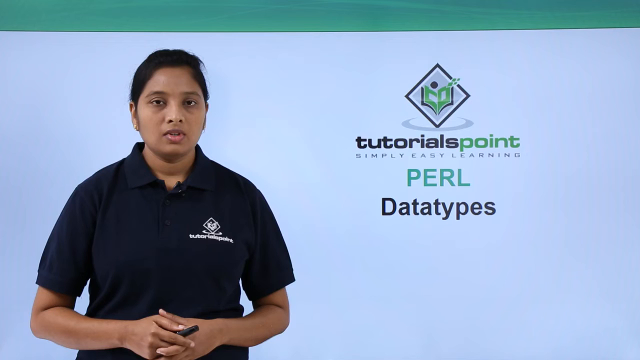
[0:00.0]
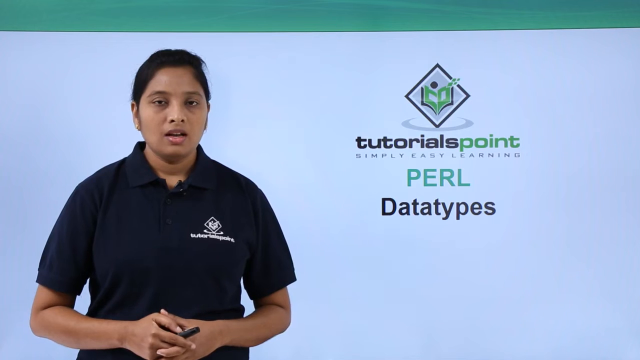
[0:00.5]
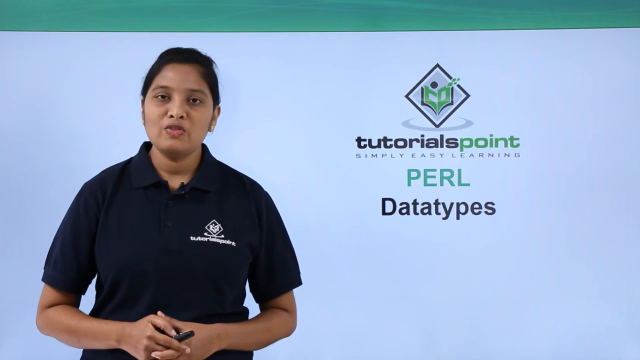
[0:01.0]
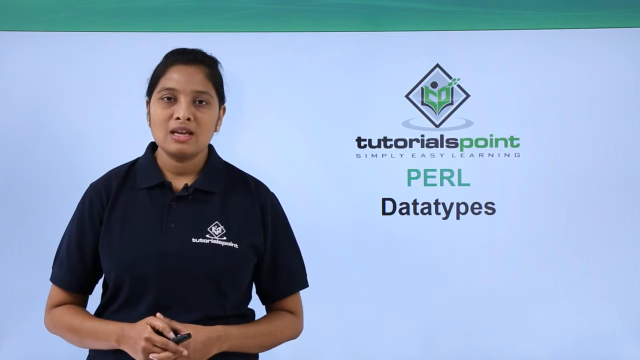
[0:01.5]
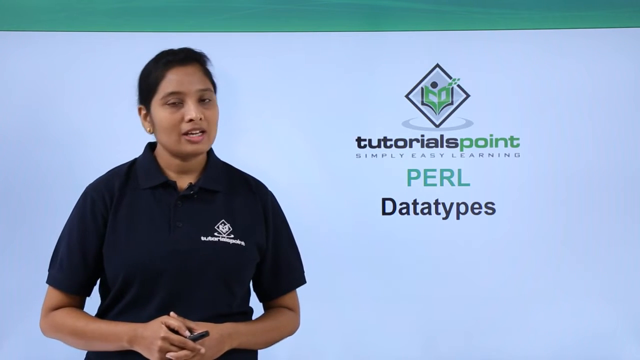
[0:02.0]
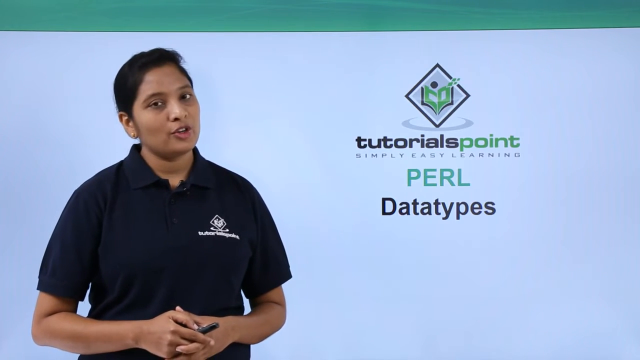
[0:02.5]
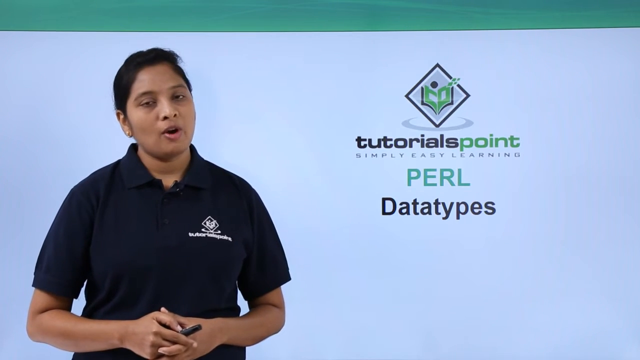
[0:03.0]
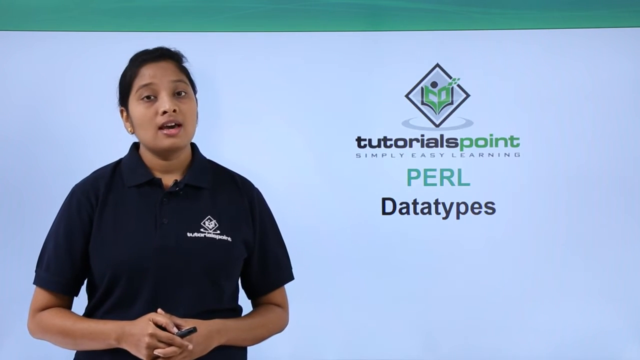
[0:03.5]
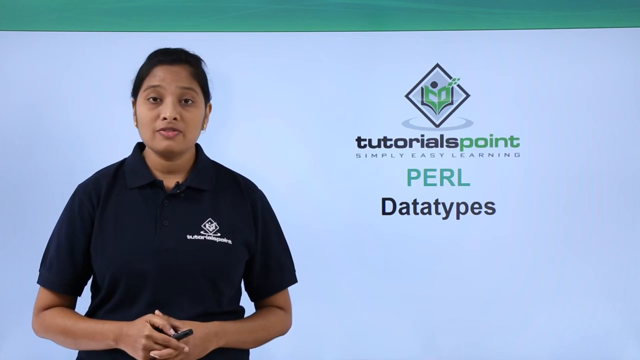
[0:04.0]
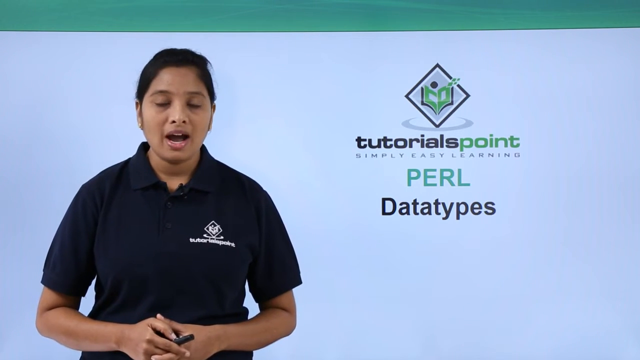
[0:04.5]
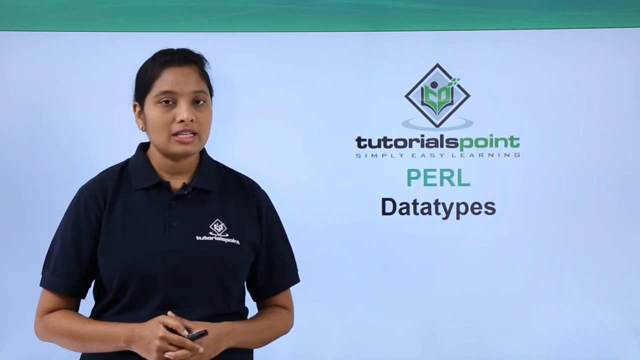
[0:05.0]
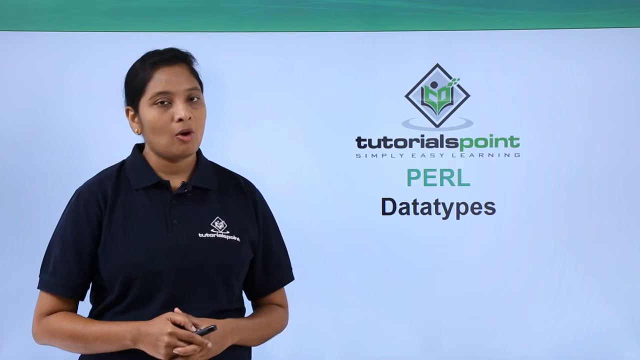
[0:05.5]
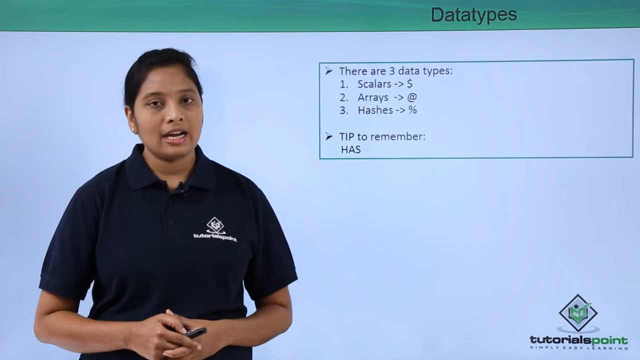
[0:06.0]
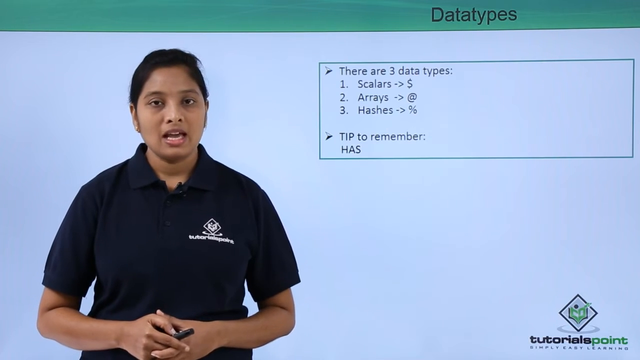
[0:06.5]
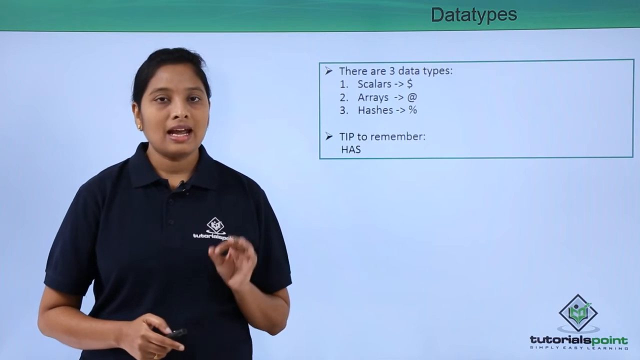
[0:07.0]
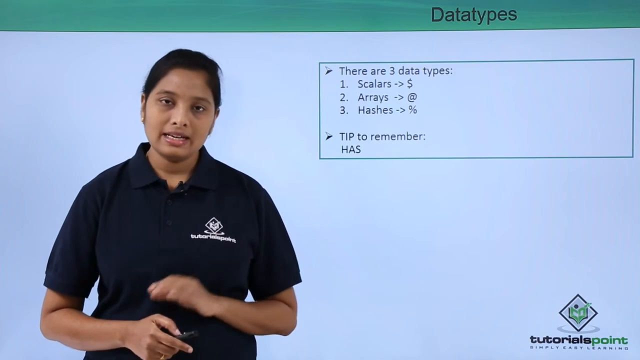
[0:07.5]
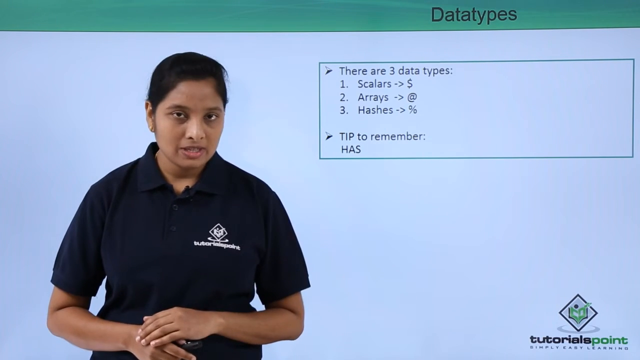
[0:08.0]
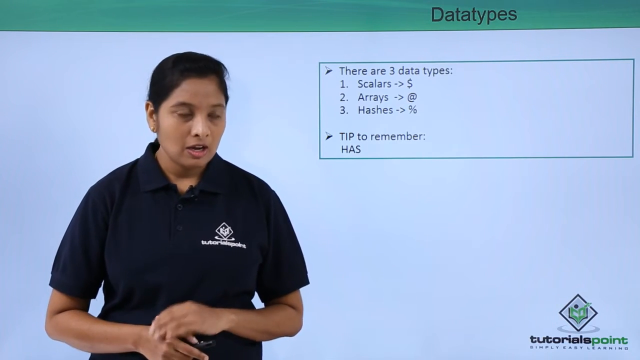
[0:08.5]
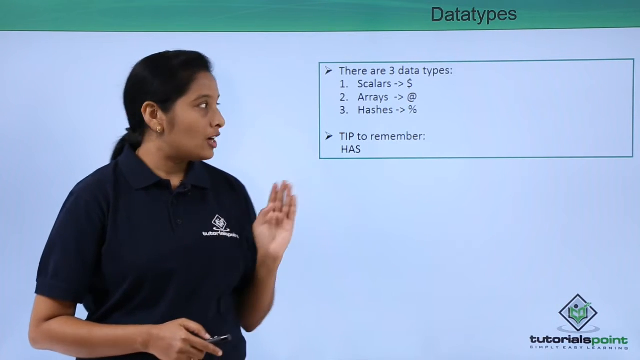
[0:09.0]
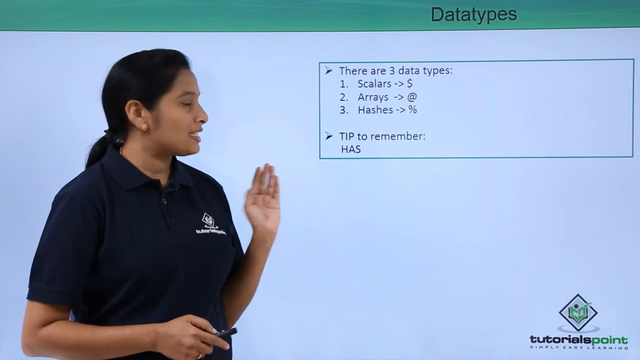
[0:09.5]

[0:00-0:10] The video concerns a data type. The company name is Tutorials Point, and its slogan is "simple easy learning." A woman in black, who looks like an Indian lady, wears earrings and has black eyes. The logo and slogan are in black and green. The next slide says there are three data types: the first is scalars, marked by the dollar sign, the second is arrays, and the third is hashes, marked by the percentage sign. A tip says to remember them as "has." The logo is at the side, and the screen looks bluish.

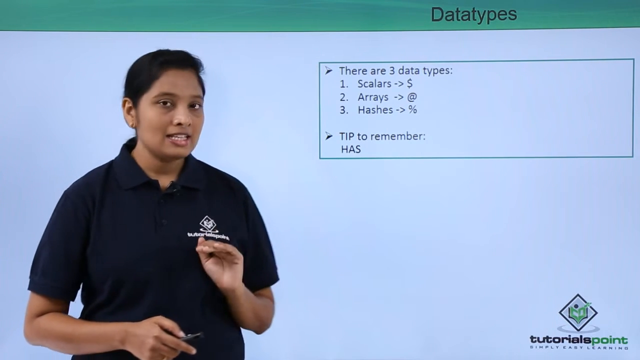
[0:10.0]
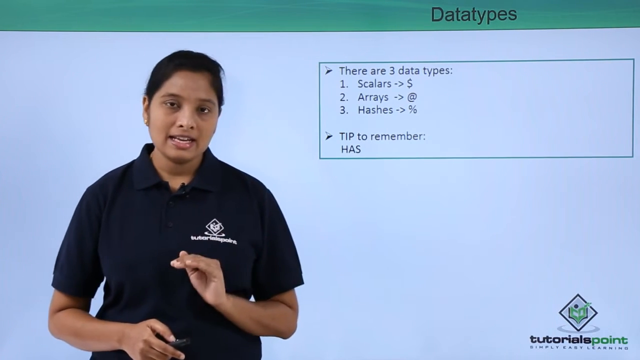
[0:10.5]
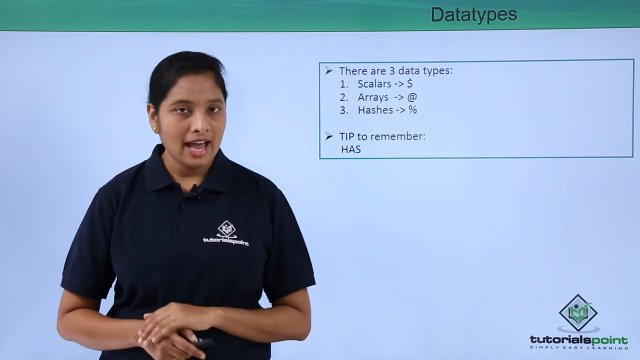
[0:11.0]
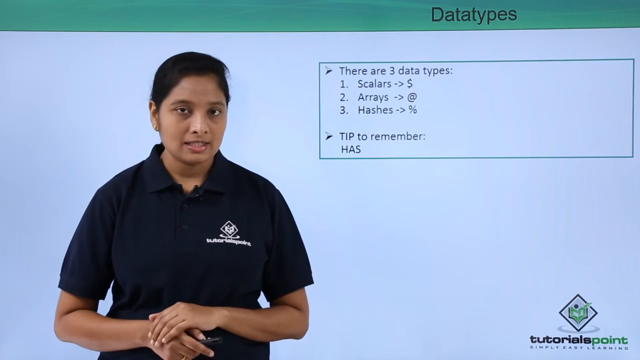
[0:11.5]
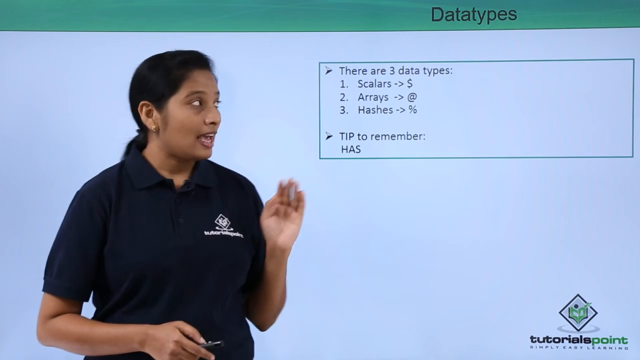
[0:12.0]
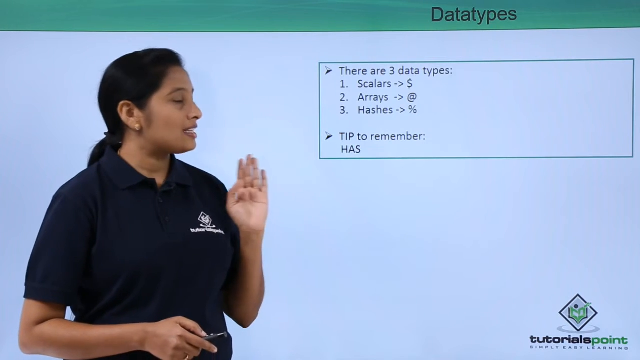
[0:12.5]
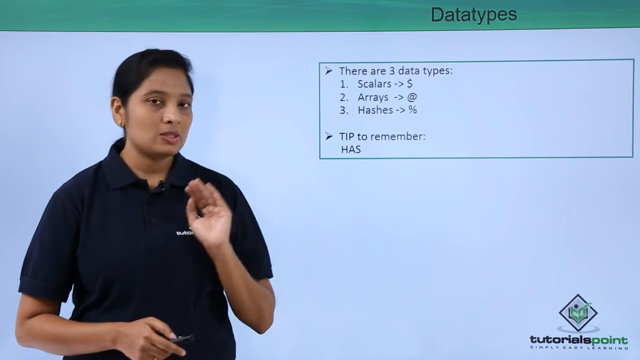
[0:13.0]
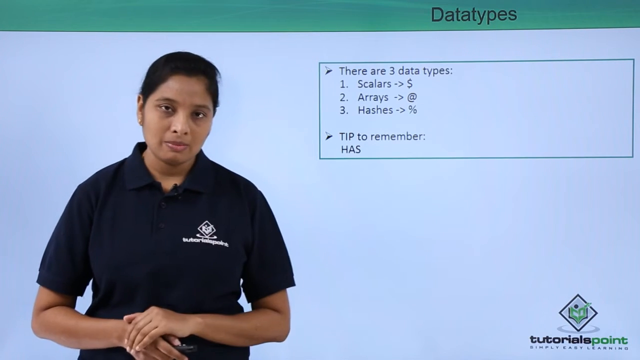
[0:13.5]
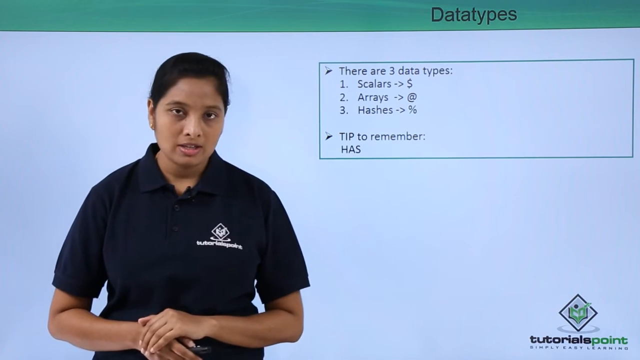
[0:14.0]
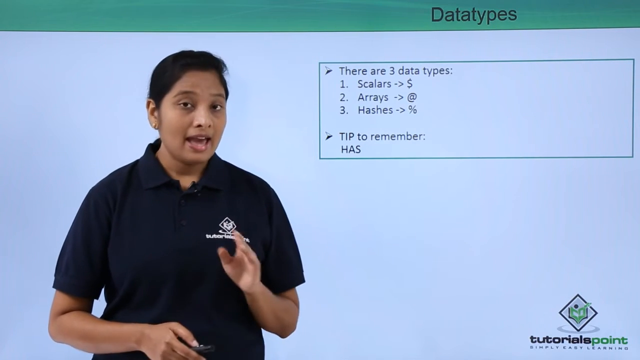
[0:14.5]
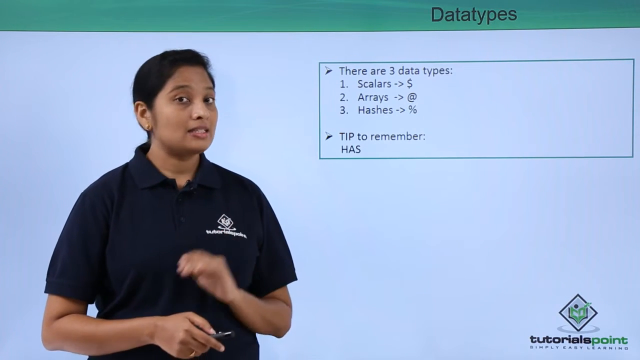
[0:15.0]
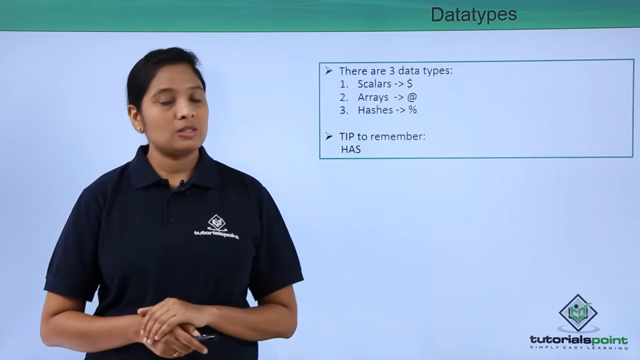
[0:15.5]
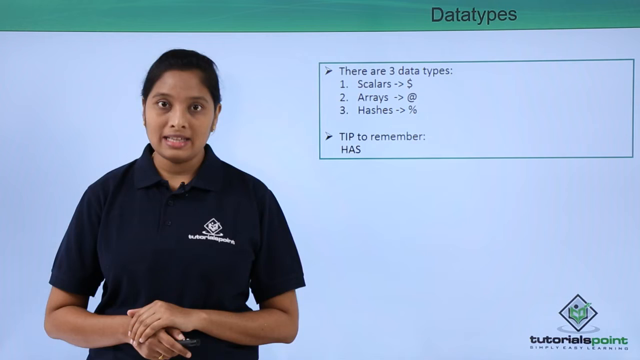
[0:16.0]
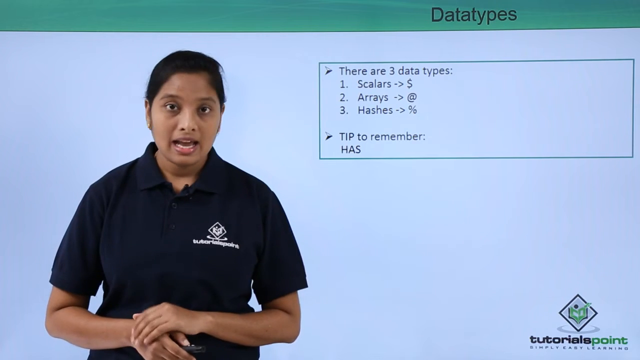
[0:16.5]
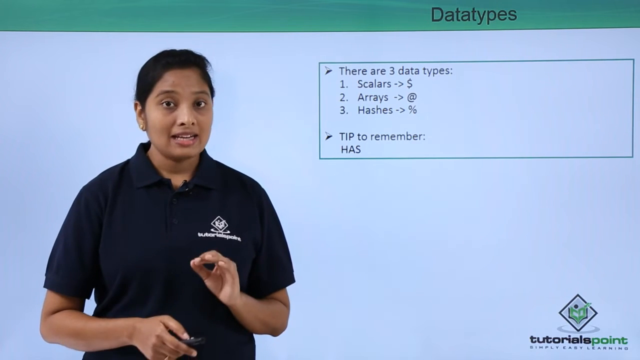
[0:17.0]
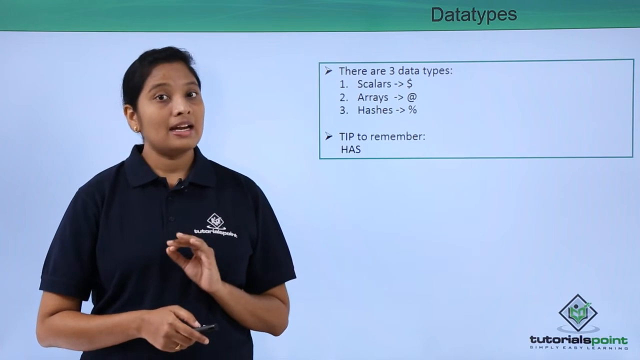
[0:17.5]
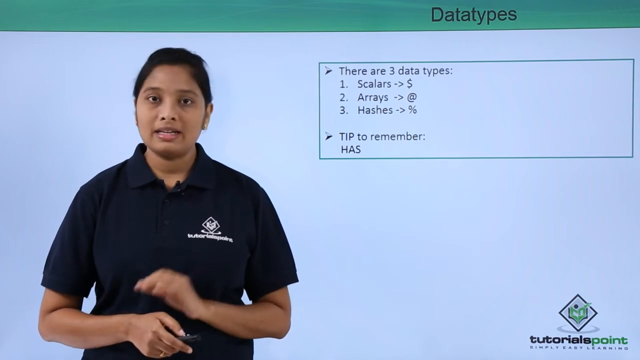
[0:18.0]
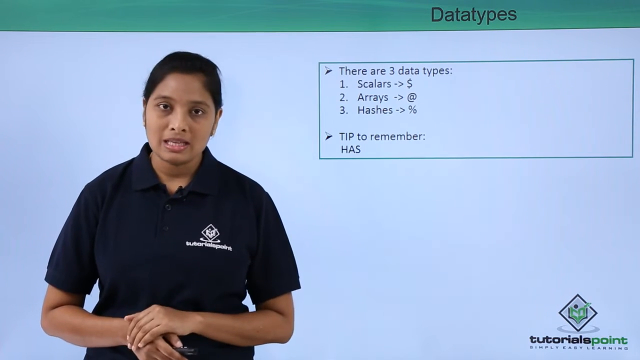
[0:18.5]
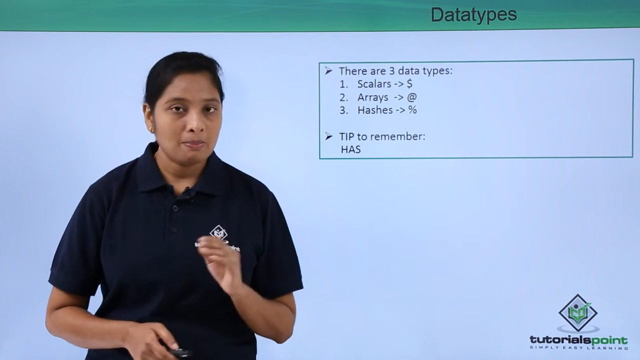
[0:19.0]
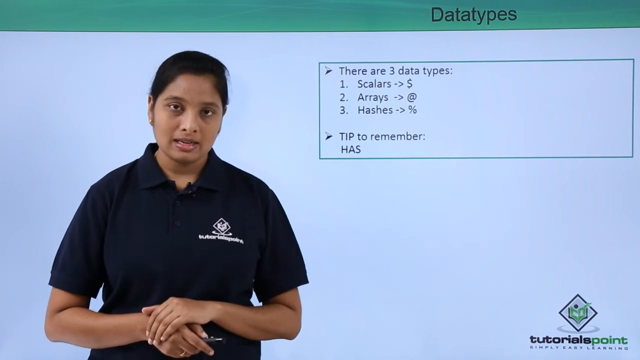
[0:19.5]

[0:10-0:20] The slide reads that there are three data types. The first is scalars, identified by the dollar sign; the second is arrays, identified by the x sign; and the third is hashes, identified by the percentage sign. A tip at the bottom says that to remember the three data types, remember them as "has." The Tutorials Point logo with its small slogan is at the bottom. Only one person appears: a woman wearing black with the company logo, which is on her right side. She is brown in complexion, has black hair, and is an Indian lady. She seems to be having fun.